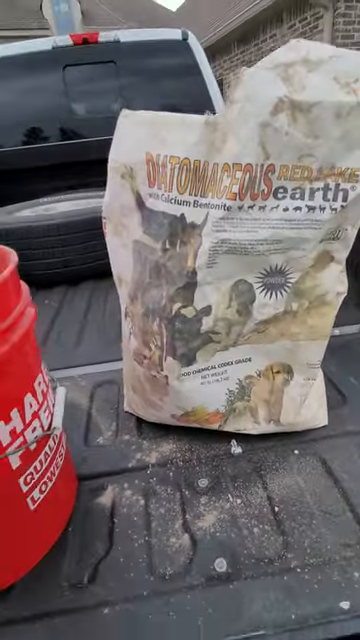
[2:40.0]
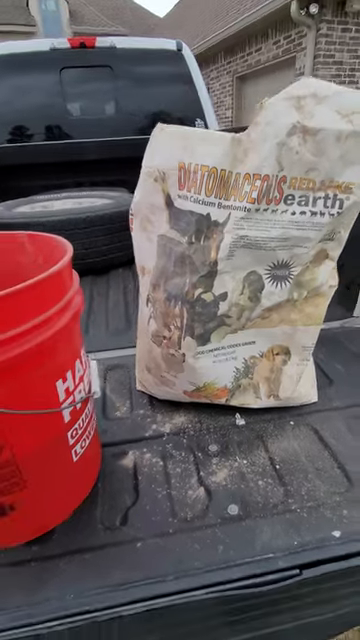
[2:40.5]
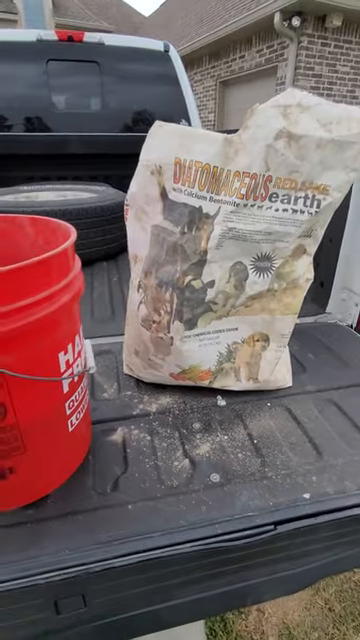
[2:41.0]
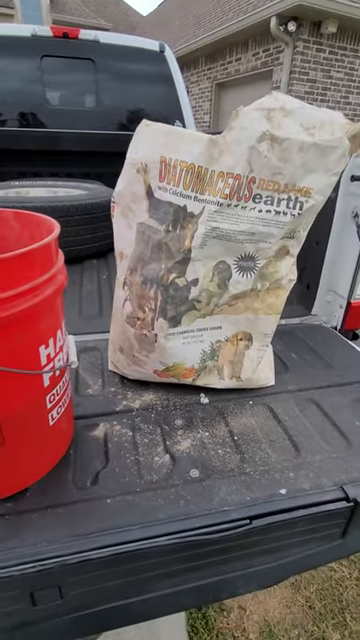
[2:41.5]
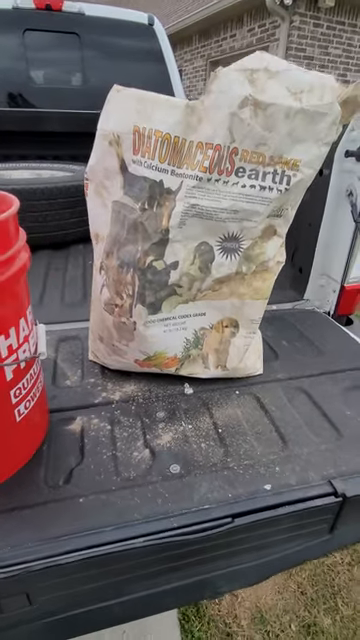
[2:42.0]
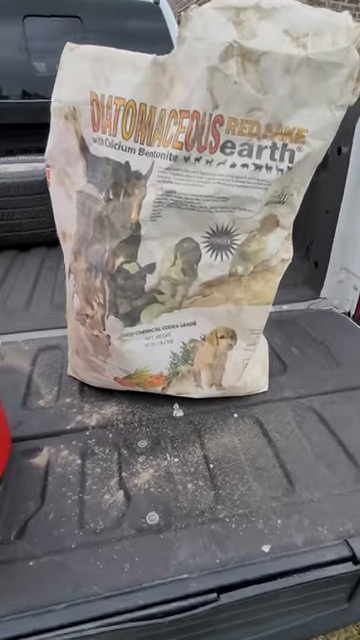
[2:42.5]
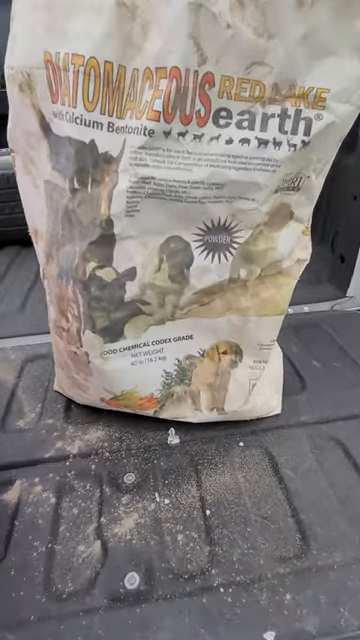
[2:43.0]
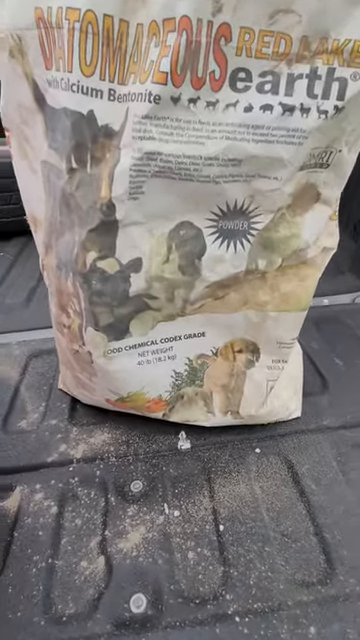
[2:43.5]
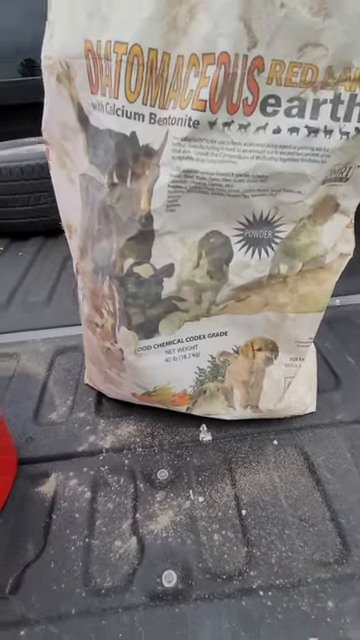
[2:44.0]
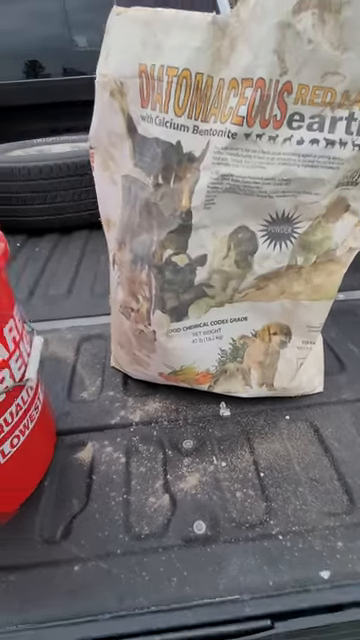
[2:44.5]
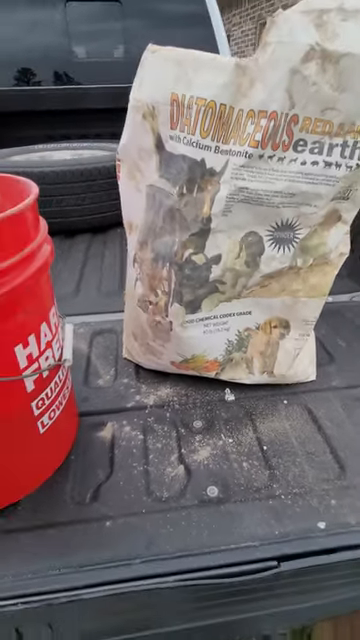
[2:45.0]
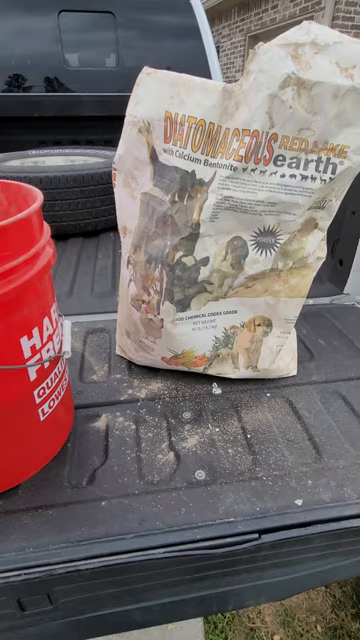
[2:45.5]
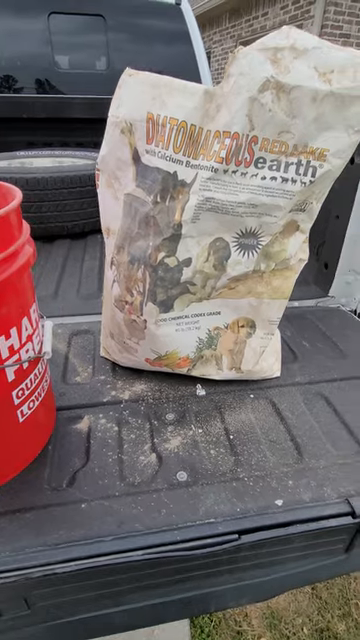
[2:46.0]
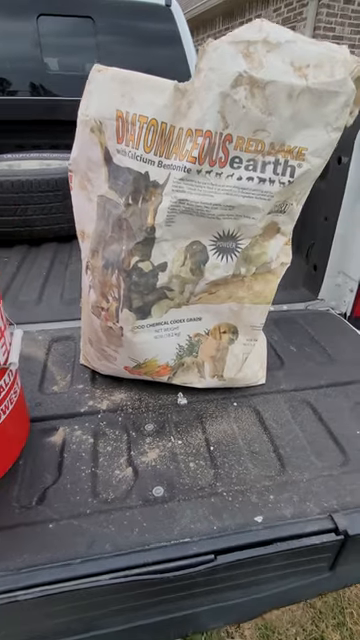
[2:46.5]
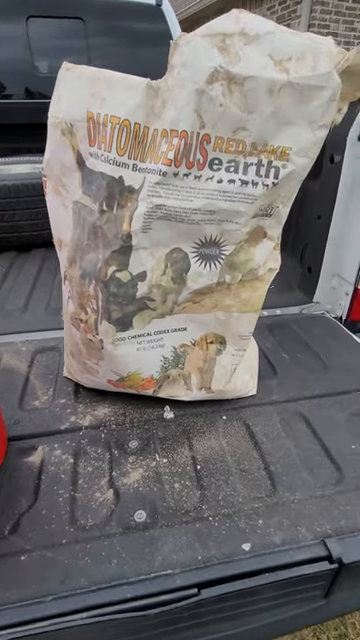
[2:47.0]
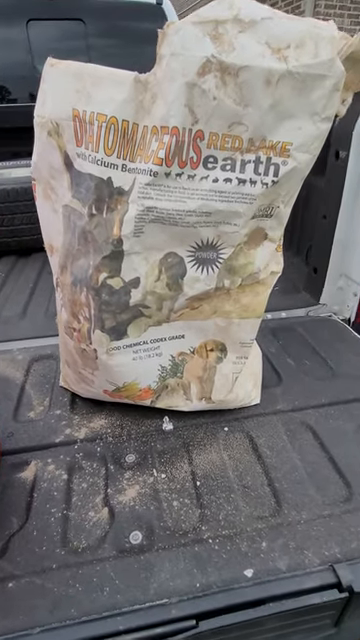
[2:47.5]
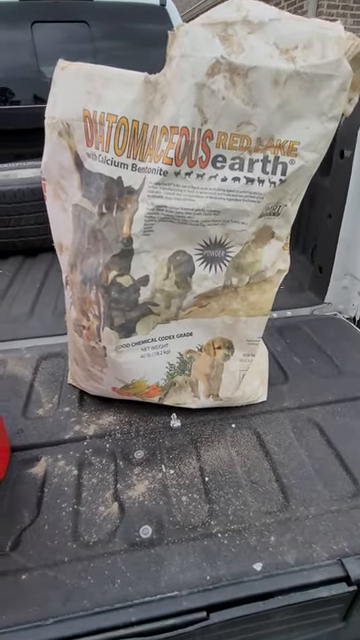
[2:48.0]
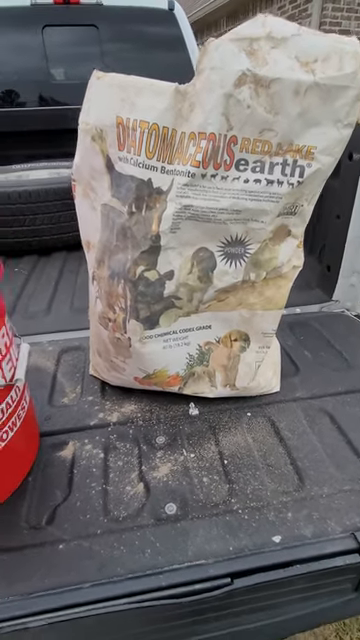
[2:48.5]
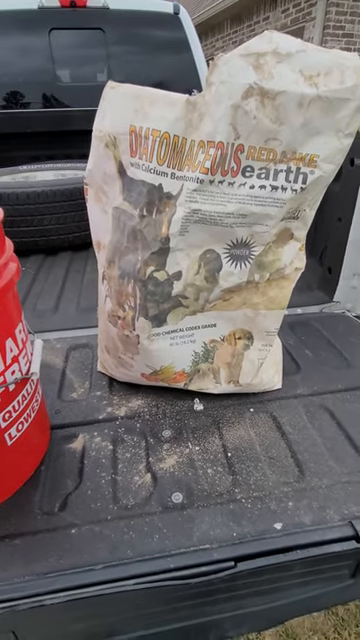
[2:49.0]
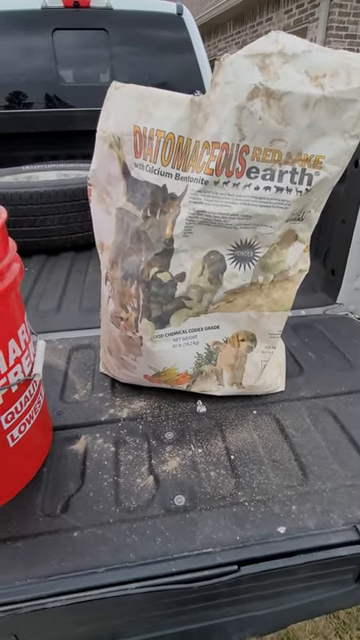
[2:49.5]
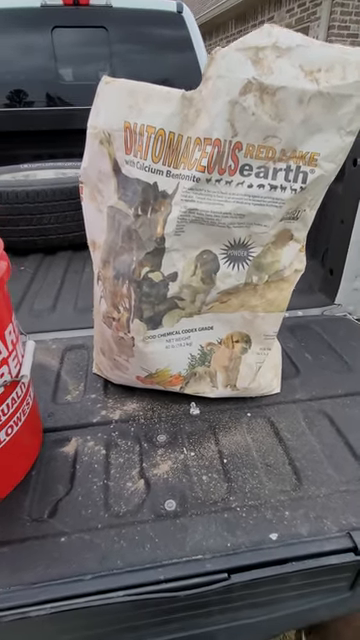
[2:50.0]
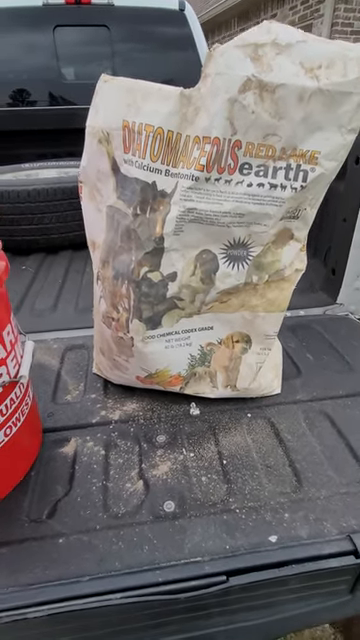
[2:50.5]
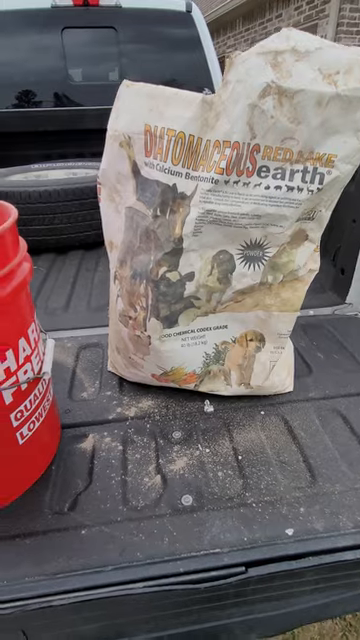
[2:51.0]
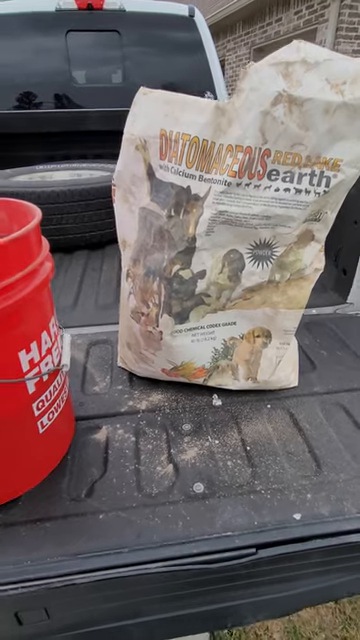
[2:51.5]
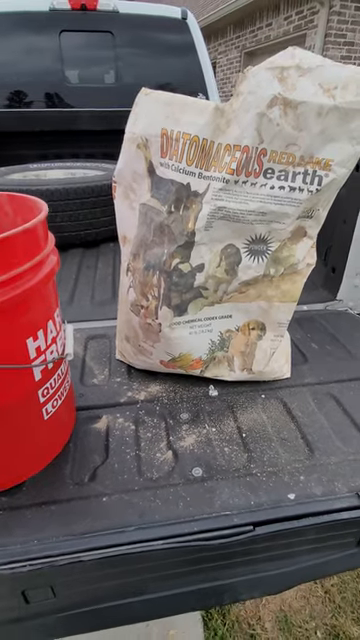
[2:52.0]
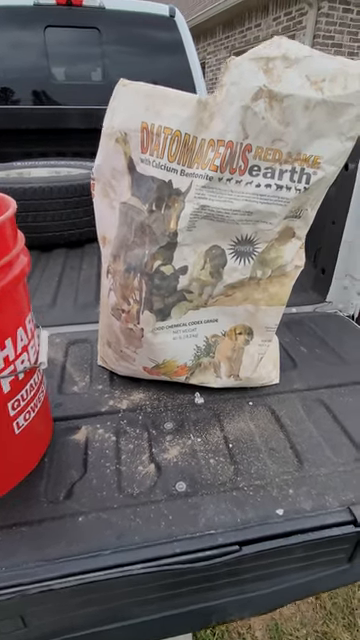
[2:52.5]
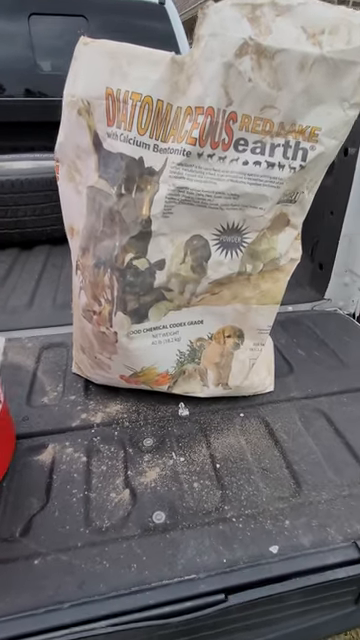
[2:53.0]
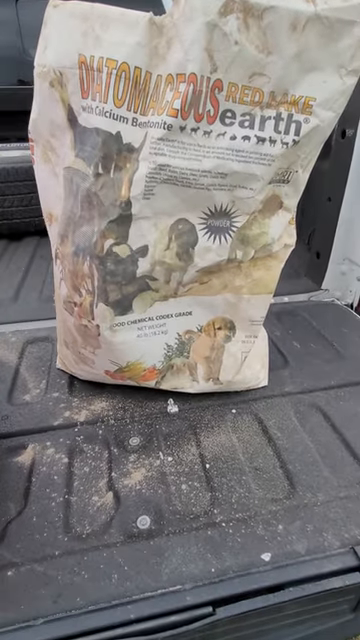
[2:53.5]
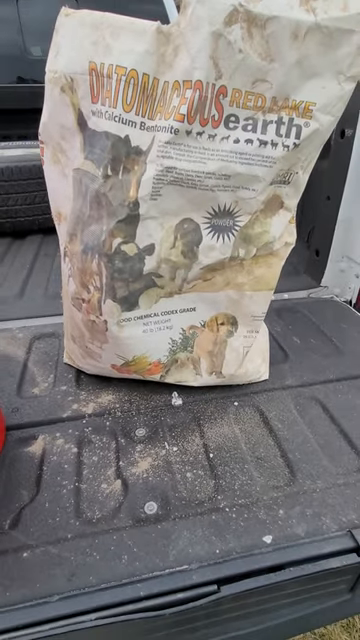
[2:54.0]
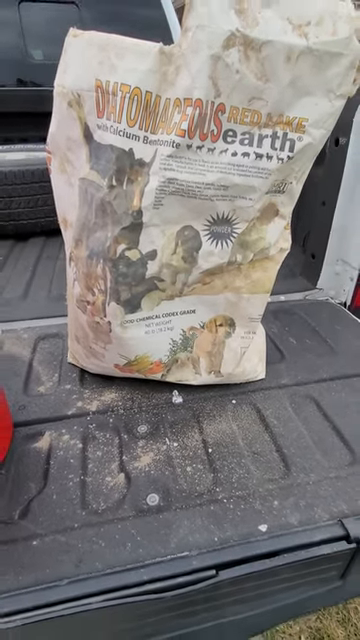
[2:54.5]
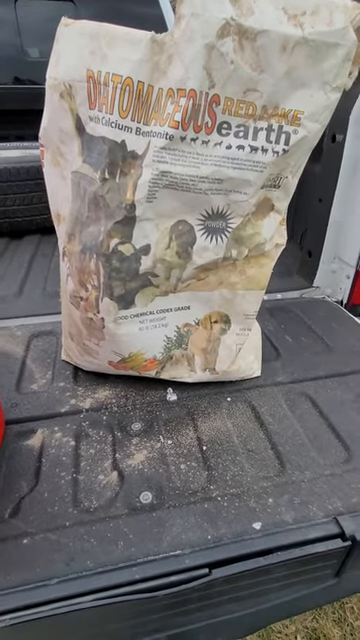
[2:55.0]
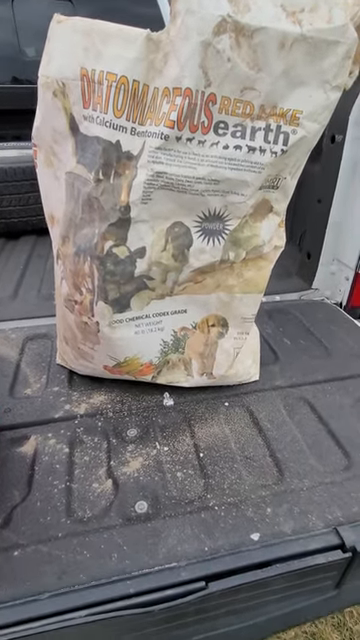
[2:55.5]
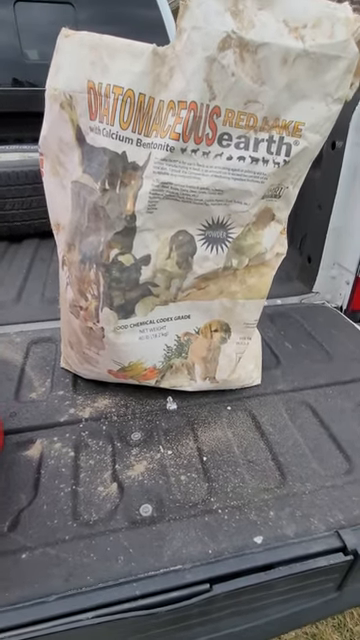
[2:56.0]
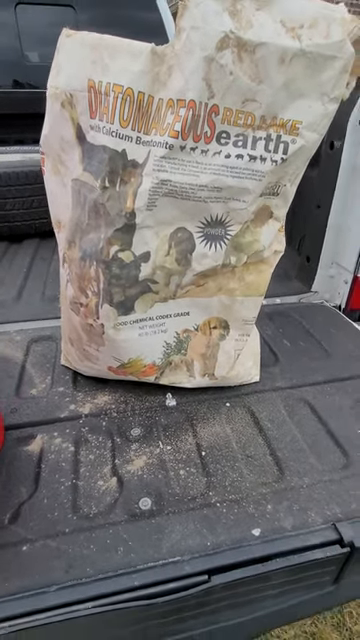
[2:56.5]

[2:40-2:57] The same white bag and part of the red bucket are on the bed of the truck, with a little powder residue on the tailgate. The camera zooms in on the bag a little and continues to hover over the same general area, with the same objects in frame and the same camera angle until the video ends.